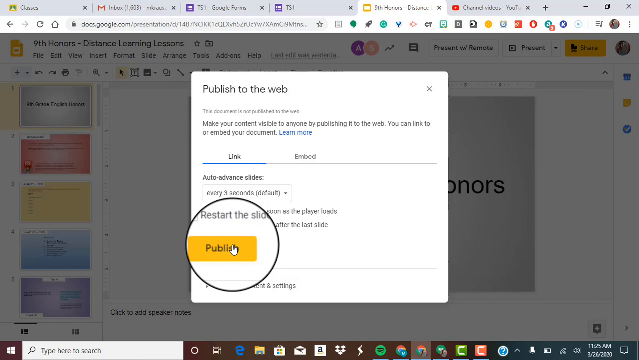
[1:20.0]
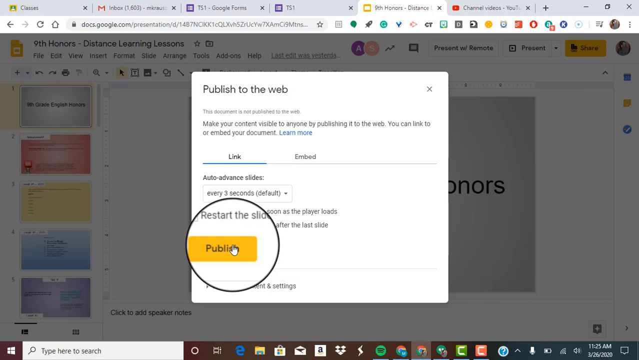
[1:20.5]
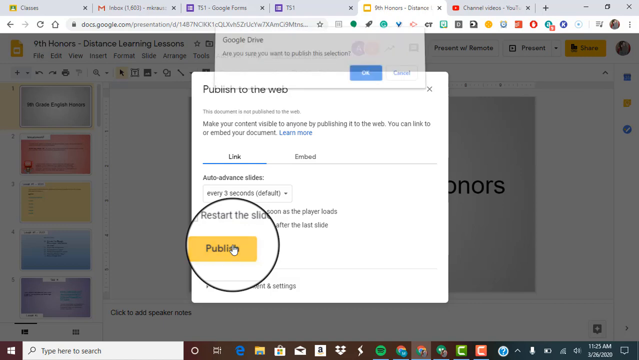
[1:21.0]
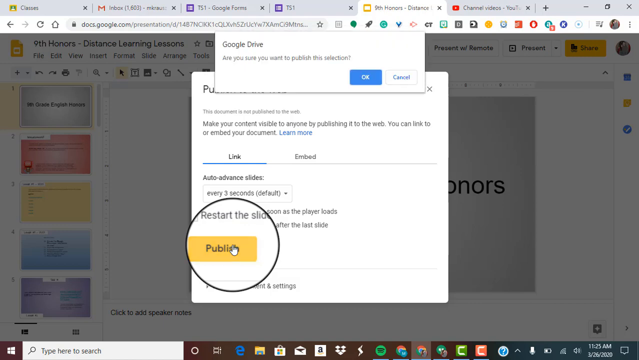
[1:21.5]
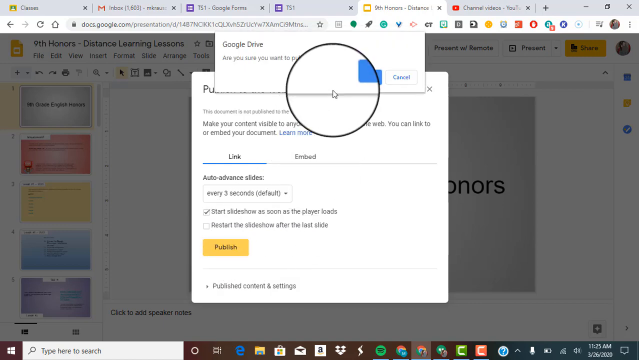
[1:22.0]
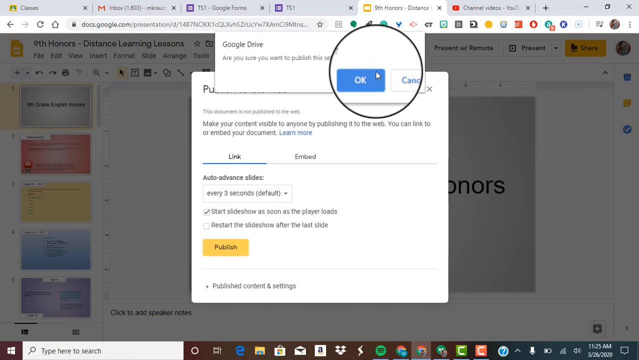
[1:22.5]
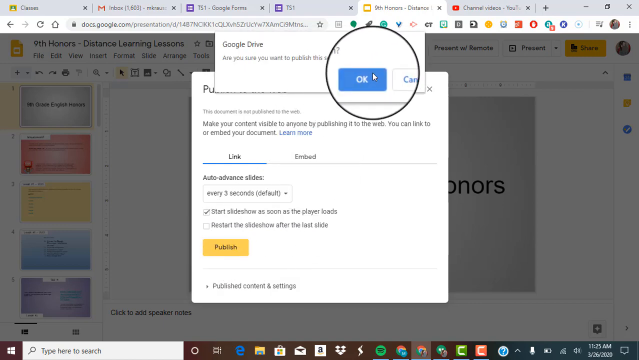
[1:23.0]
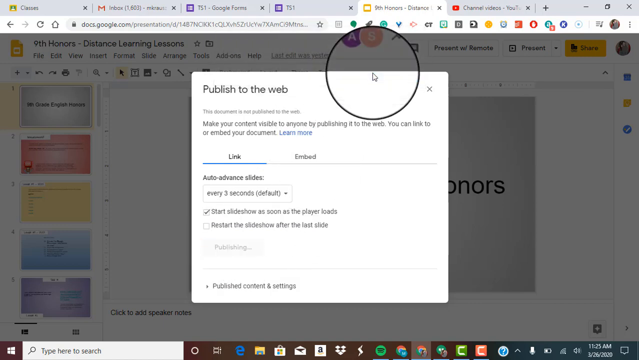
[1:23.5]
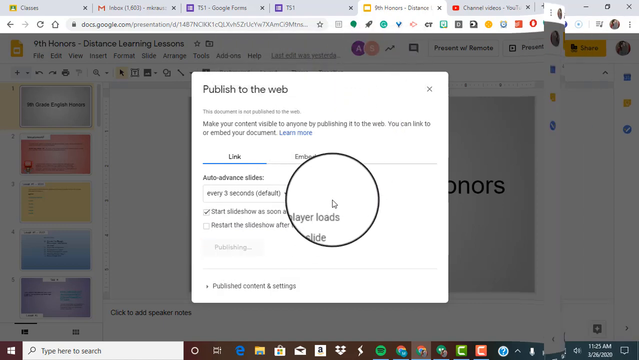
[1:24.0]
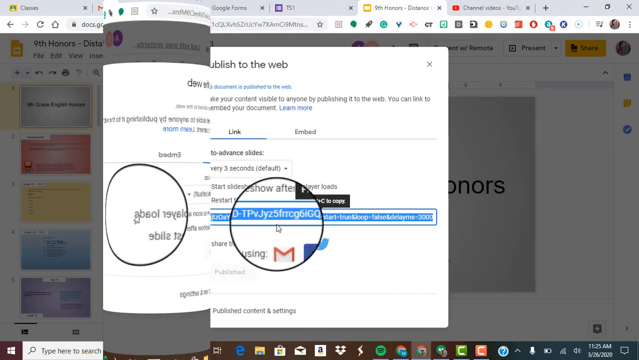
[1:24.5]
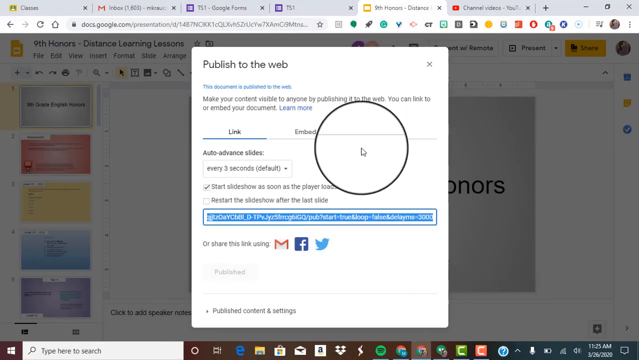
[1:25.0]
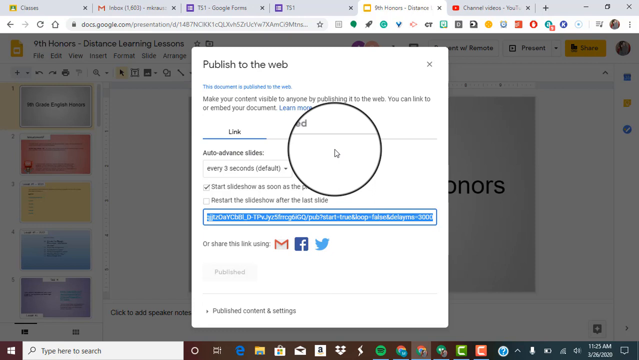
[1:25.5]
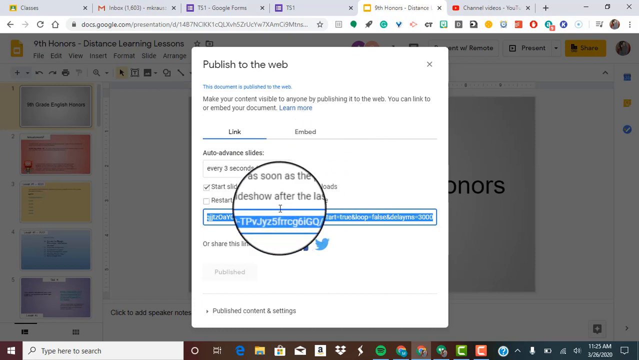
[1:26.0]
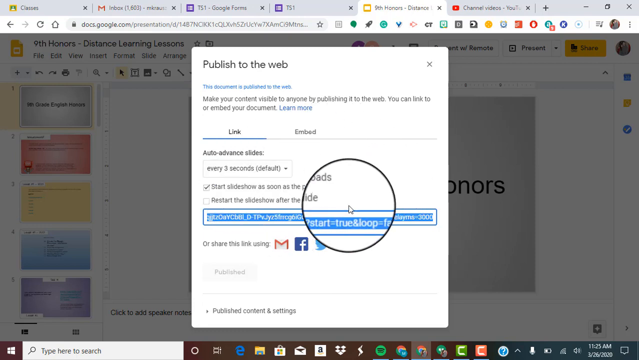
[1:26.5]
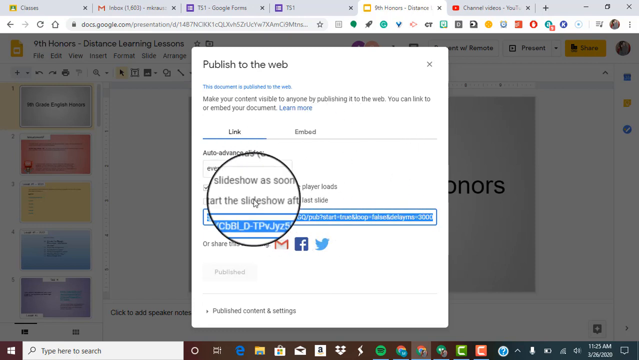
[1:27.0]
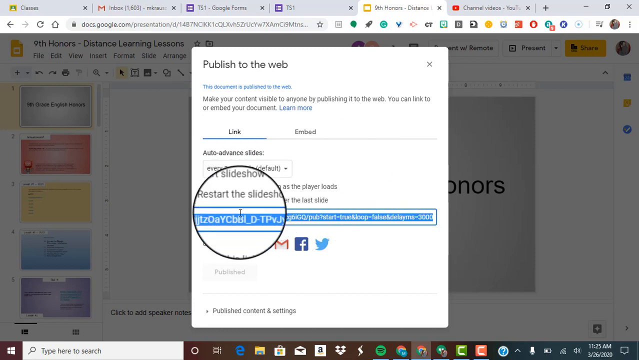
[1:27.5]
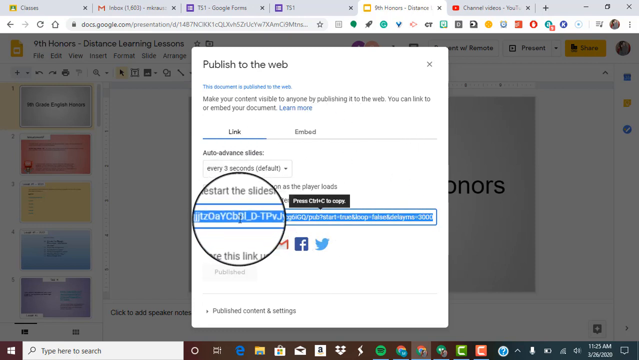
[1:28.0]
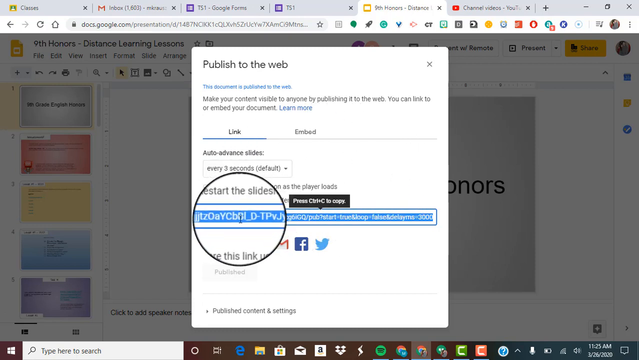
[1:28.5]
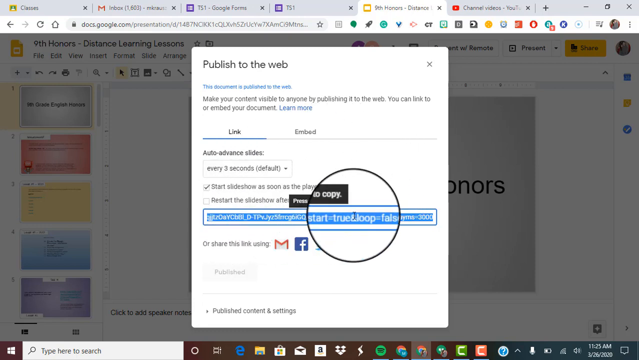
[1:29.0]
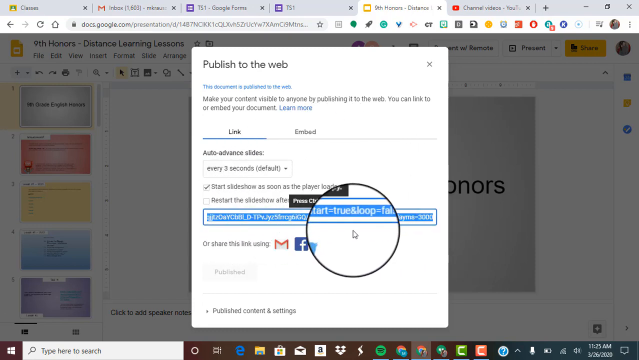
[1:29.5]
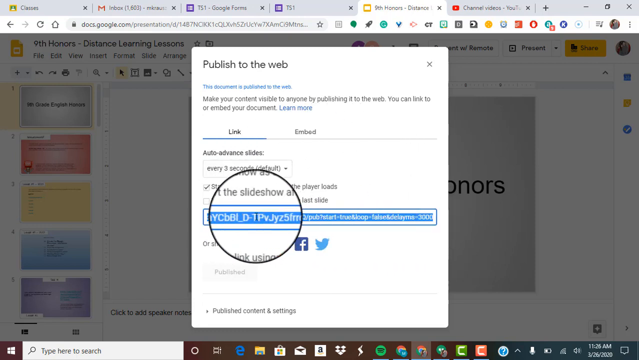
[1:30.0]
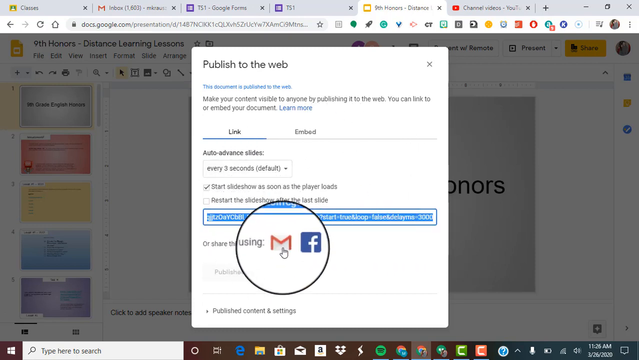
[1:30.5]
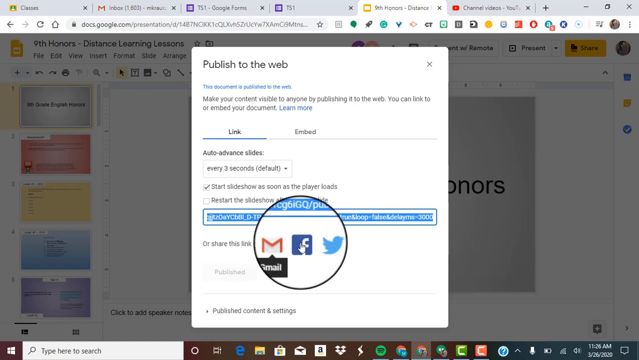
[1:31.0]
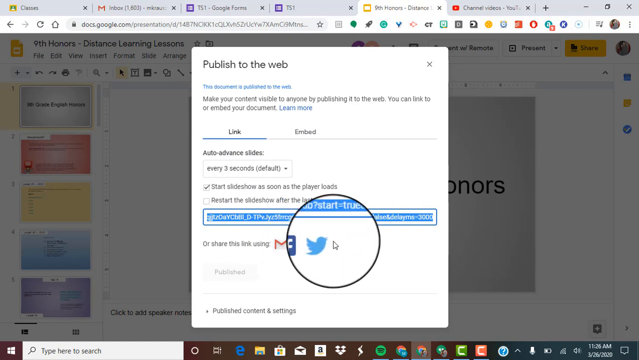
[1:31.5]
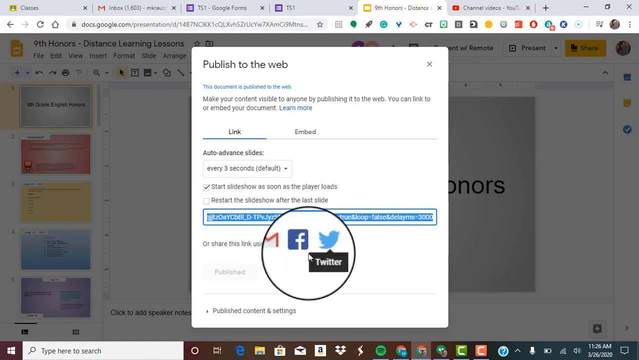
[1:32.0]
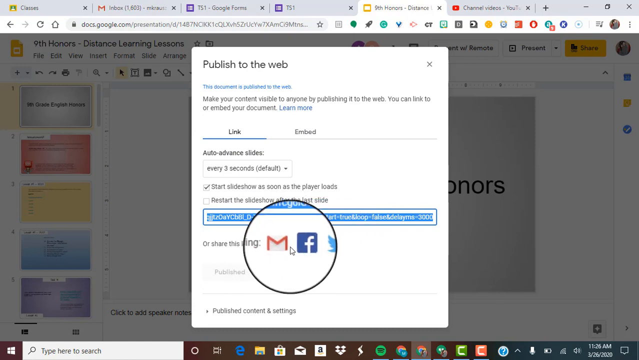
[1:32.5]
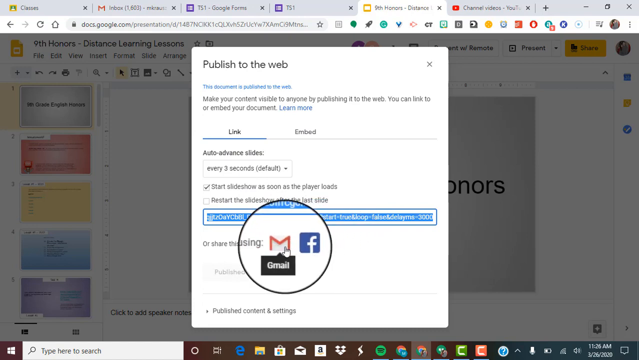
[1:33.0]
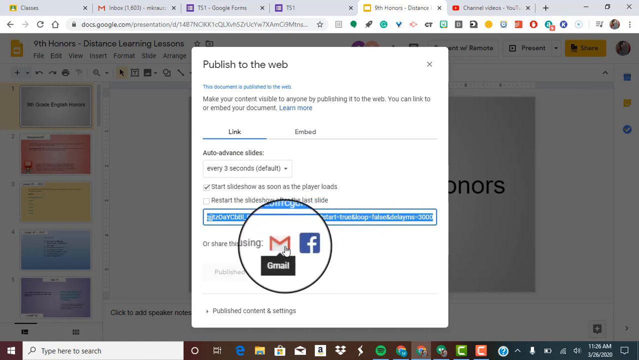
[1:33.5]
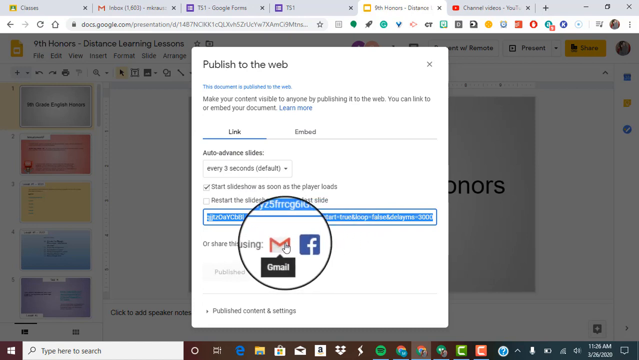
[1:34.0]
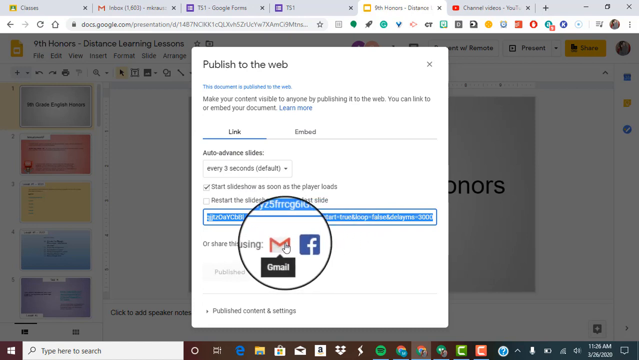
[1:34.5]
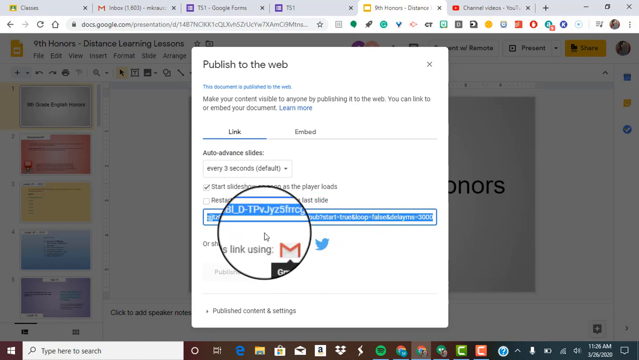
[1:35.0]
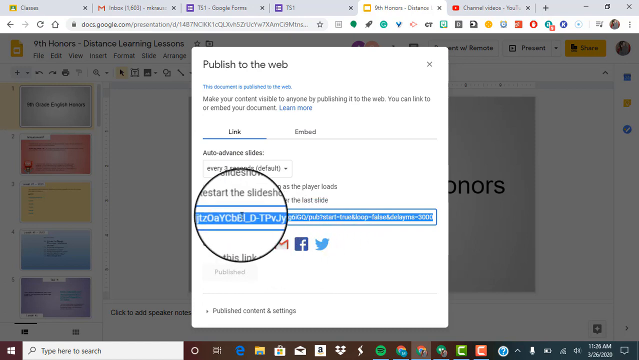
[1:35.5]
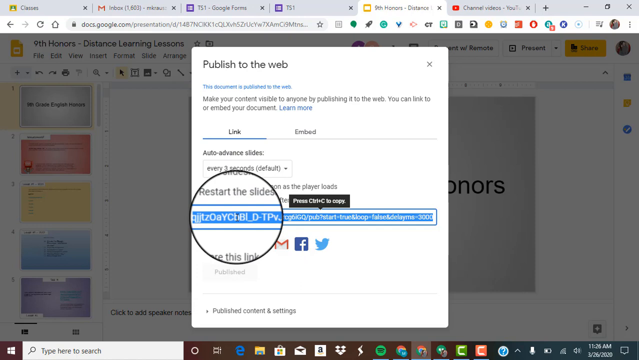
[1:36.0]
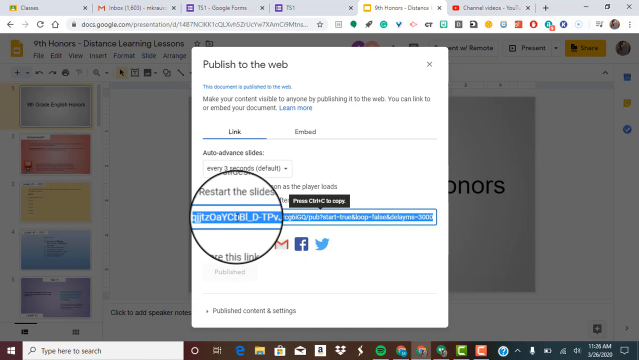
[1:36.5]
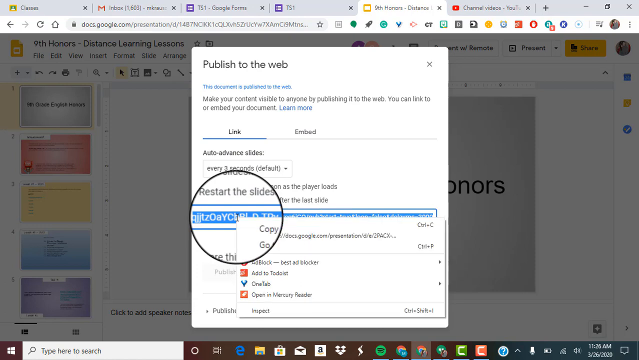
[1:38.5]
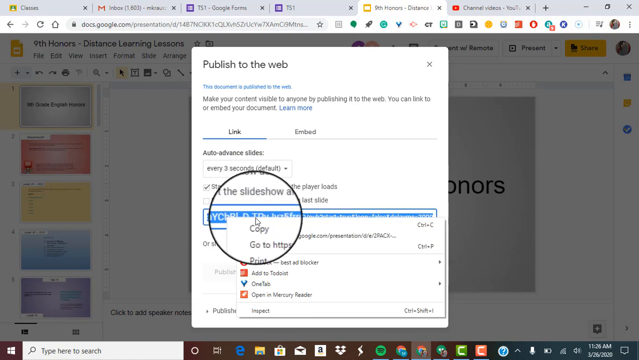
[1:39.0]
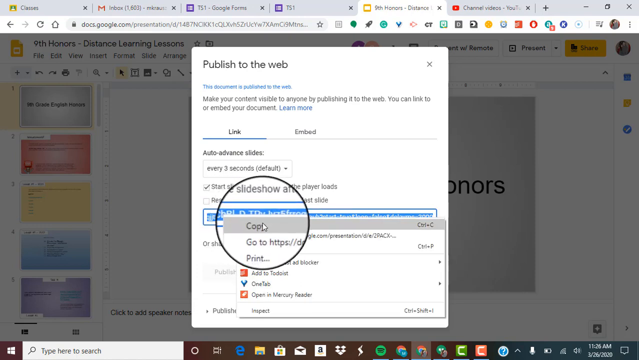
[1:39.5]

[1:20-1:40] A Google slide is shown in Chrome, with multiple tabs open at the top. Along the side are the different pages of the slide in gray, red, yellow, blue and purple, and part of the gray slide is in the background. A box titled "Publish to Web" is open, and the mouse, inside a clear circle with a thin black line around it, is over the word "Publish." It is clicked, and a Google Drive box comes up asking "Are you sure you want to publish this?"; "Yes" is clicked. In a transition the screen moves like a turning page, and the Publish to Web box remains. A link at the bottom looks highlighted, and the mouse circles around, then slides across the link multiple times. Apparently a right-click follows, since another box pops up, and the option "Copy" is selected.